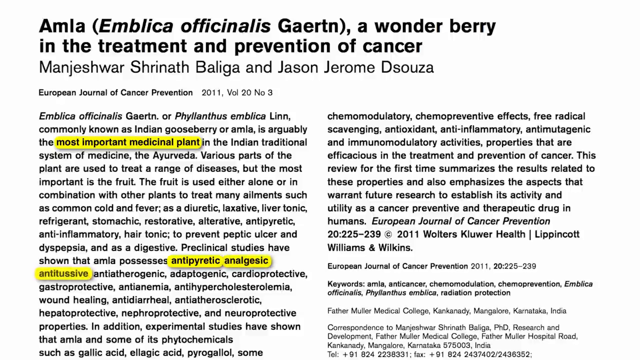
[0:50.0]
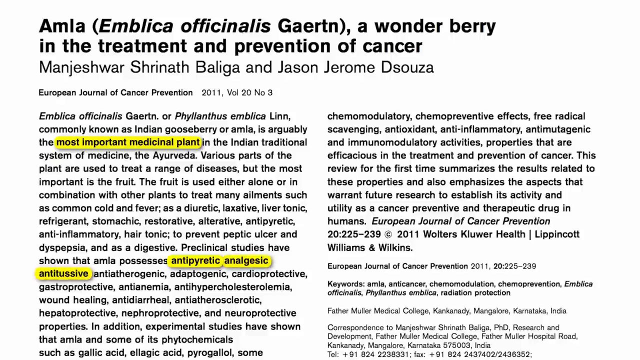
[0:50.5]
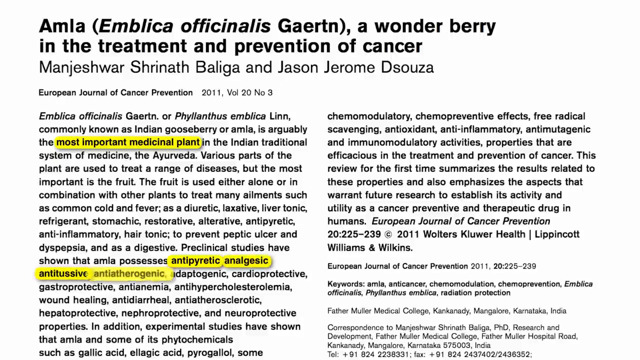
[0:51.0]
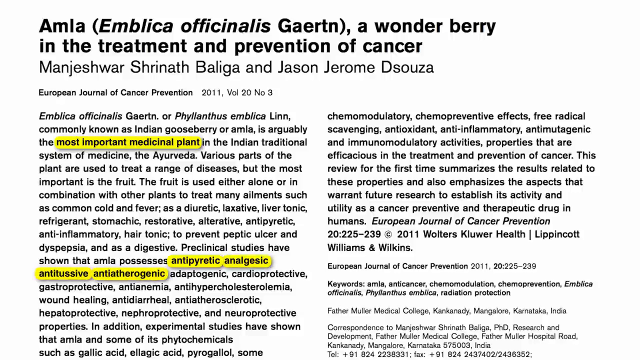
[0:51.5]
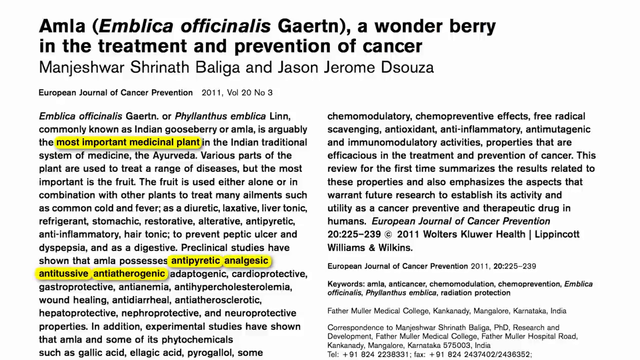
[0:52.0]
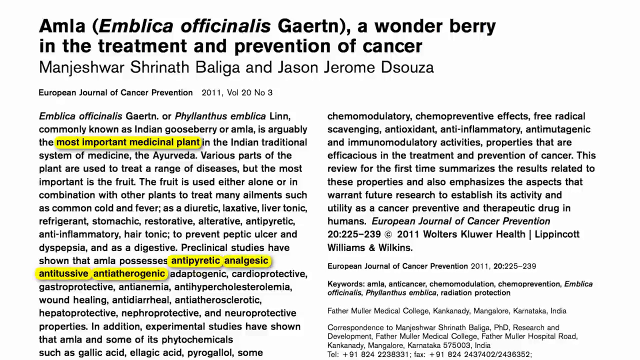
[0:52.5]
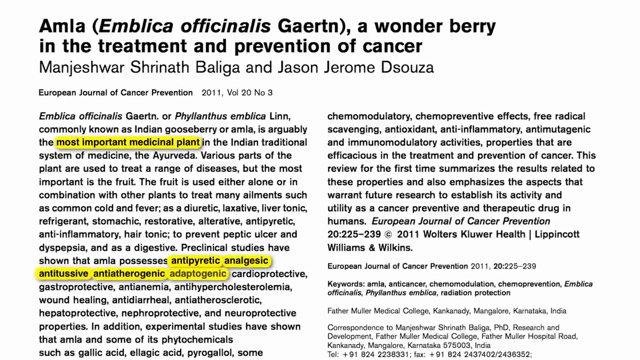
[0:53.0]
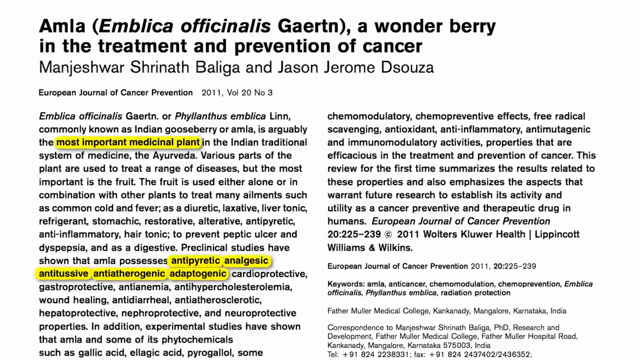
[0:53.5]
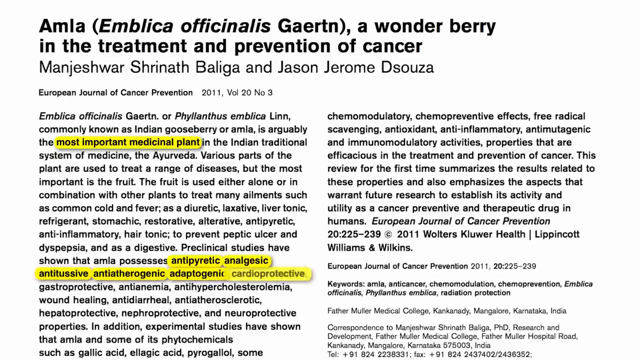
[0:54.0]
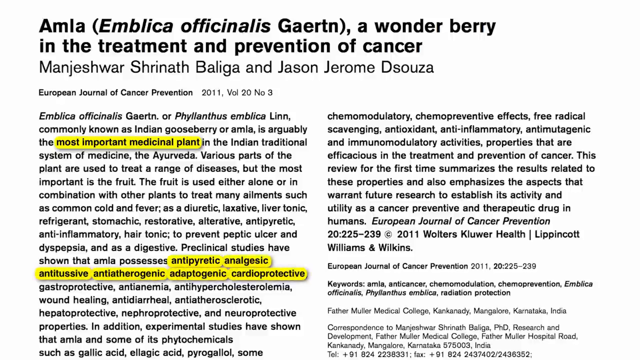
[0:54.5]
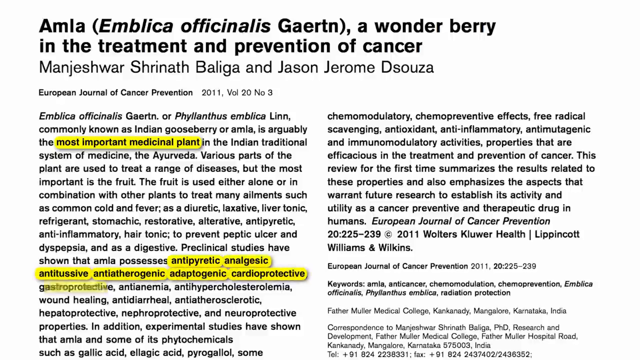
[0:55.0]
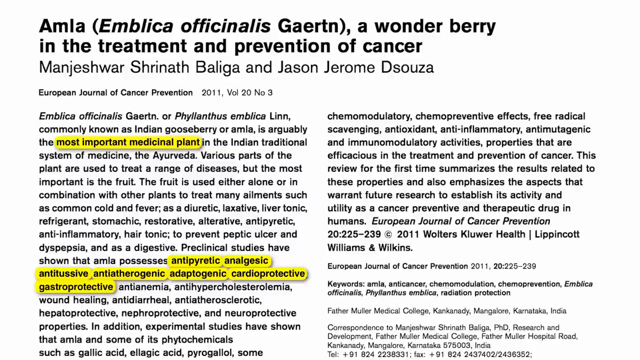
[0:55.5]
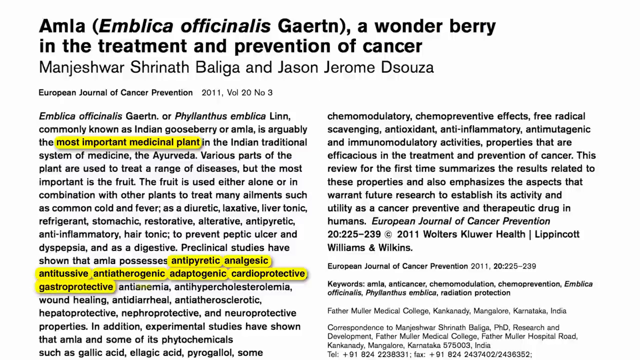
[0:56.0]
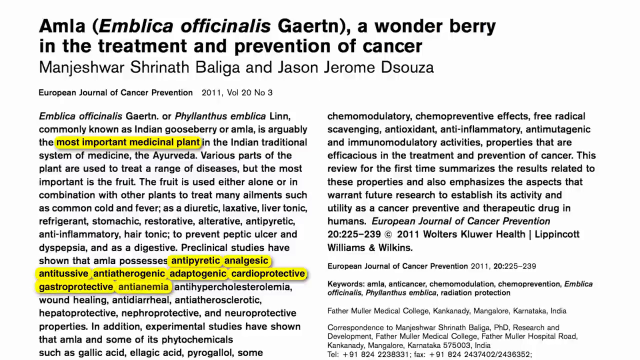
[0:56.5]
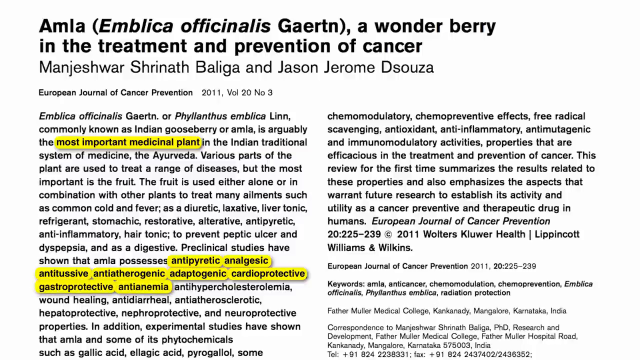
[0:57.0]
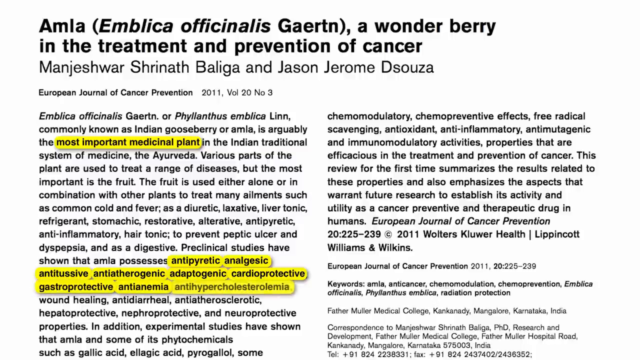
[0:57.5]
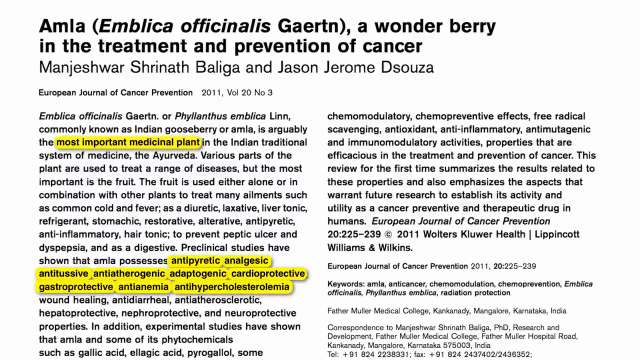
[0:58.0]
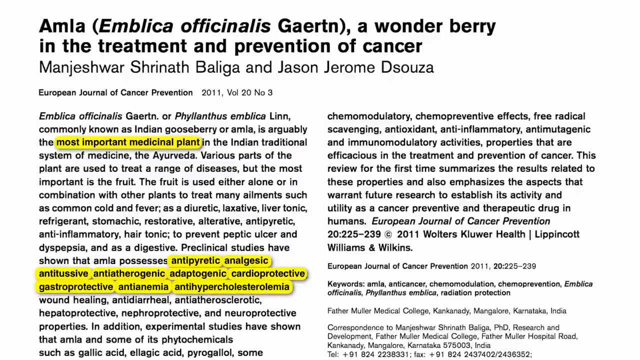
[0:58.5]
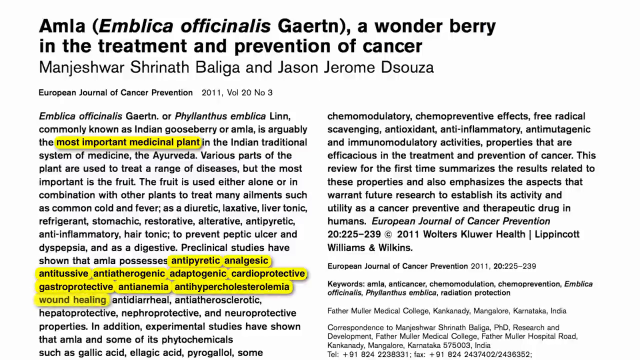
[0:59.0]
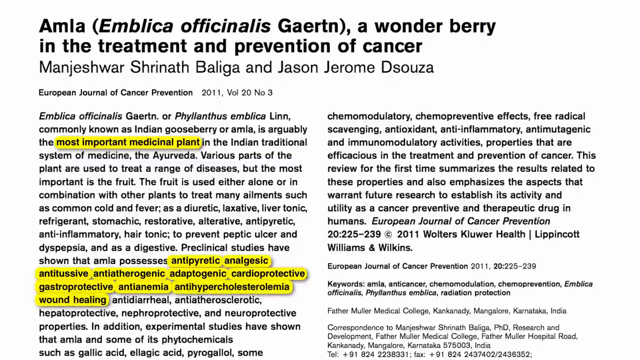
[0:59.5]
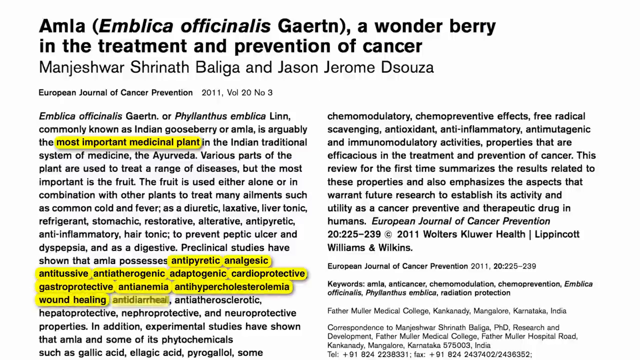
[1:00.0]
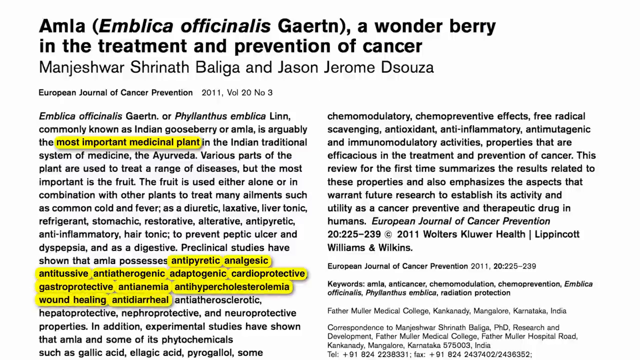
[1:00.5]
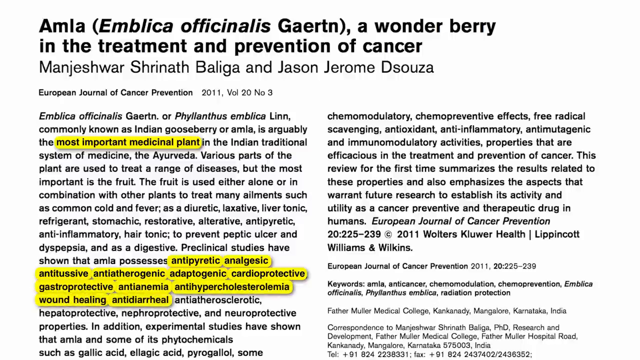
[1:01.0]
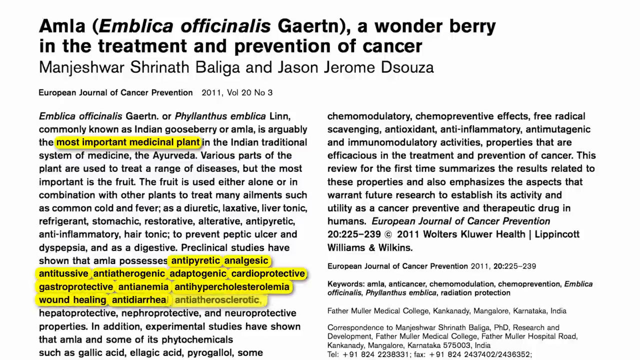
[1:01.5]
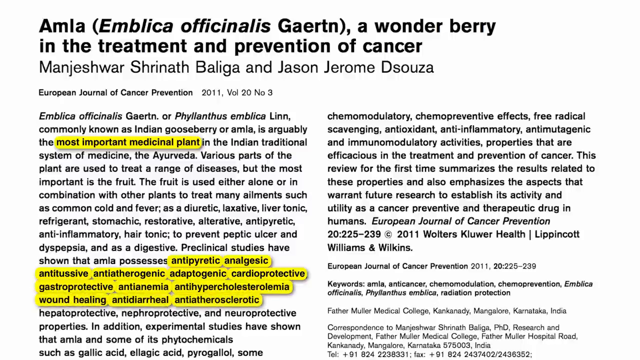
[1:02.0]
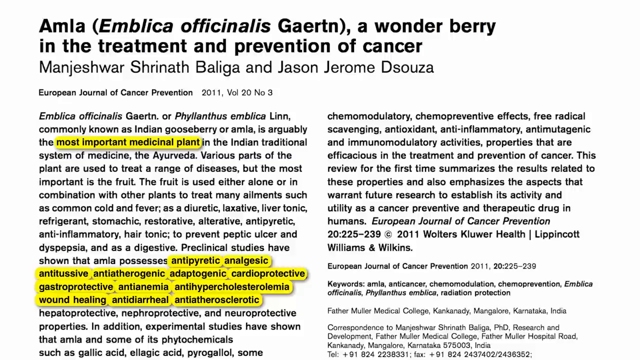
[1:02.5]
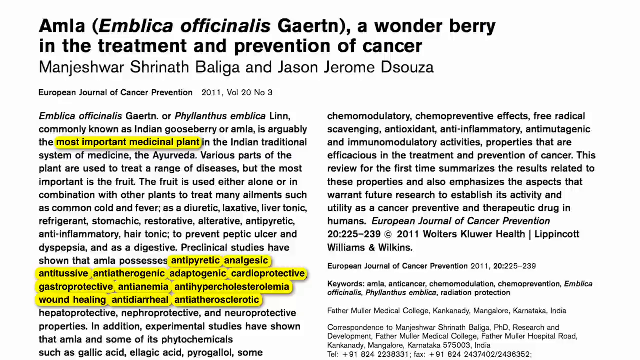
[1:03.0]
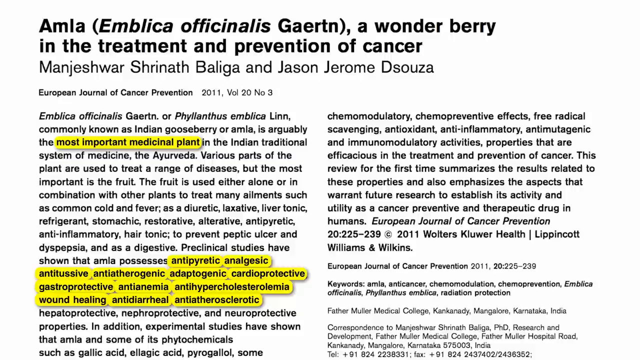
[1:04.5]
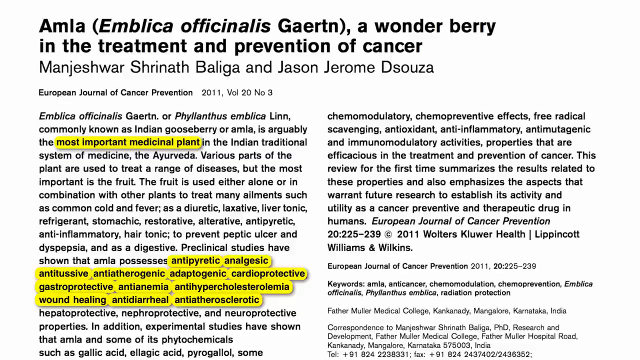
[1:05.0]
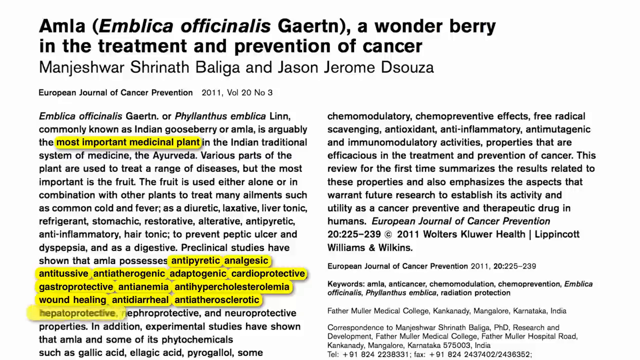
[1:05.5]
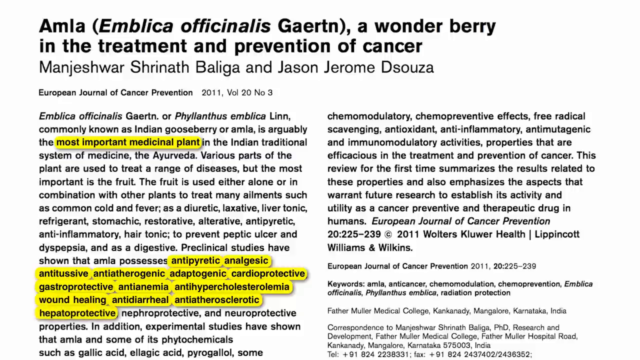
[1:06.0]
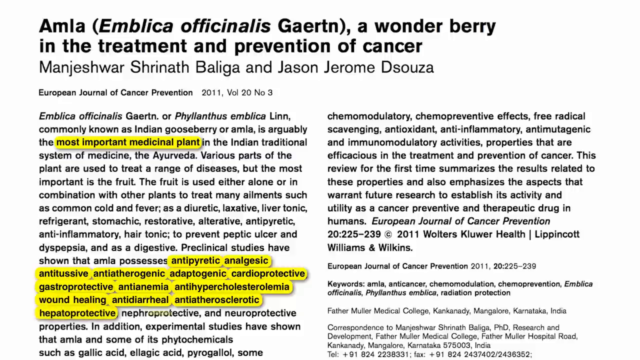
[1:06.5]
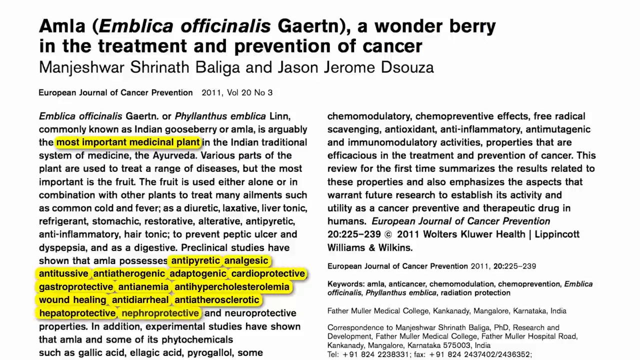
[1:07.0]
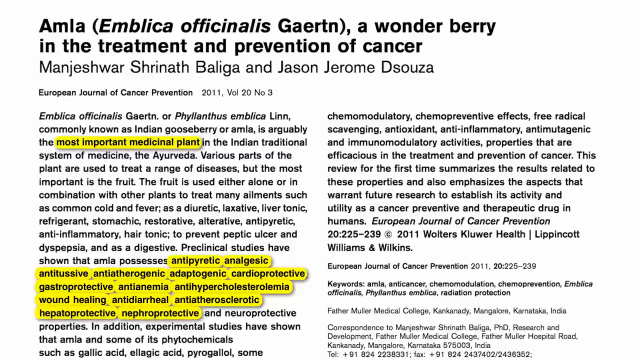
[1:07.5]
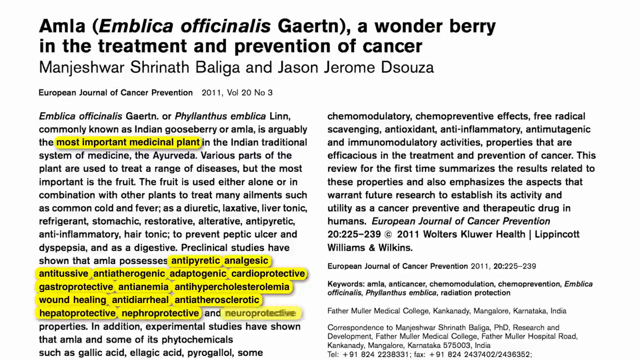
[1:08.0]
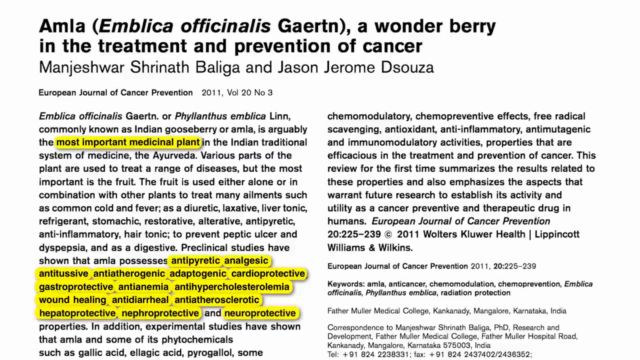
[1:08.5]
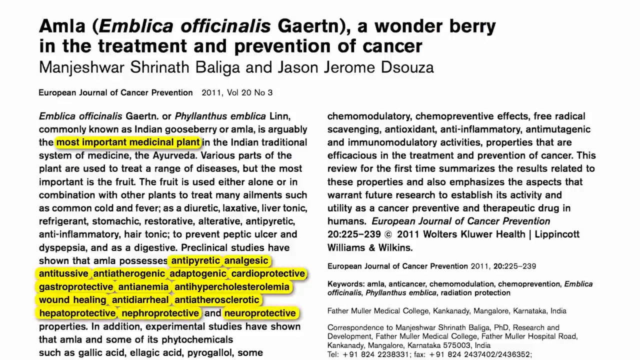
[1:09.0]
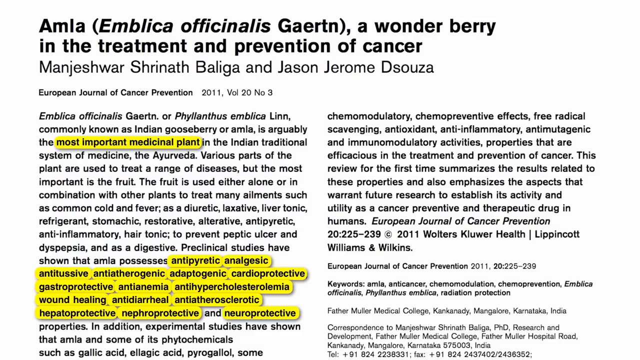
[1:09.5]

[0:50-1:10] The article is shown on a white background, with the title "Amla (Emblica officinalis Gaertn), a wonder berry in the treatment and prevention of cancer" at the top and the authors' names underneath, Manjeshwar Shrinath Baliga and Jason Jerome Dsouza. It was published in the European Journal of Cancer Prevention, 2011, volume 20, number 3. Of the two columns of text, some is already highlighted: in the left column, "most important medicinal plants" is highlighted in yellow toward the top of the paragraph, and a little further down the words "antipyretic", "analgesic" and "antitussive" are each highlighted separately in yellow. The highlighting continues word by word: "antiatherogenic", "adaptogenic", "cardioprotective", "gastroprotective", "antianemia", "antihypercholesterolemia", "wound healing", "antidiarrheal", "antiatherosclerotic". It then pauses for a few seconds before continuing with "hepatoprotective", "nephroprotective" and "neuroprotective".